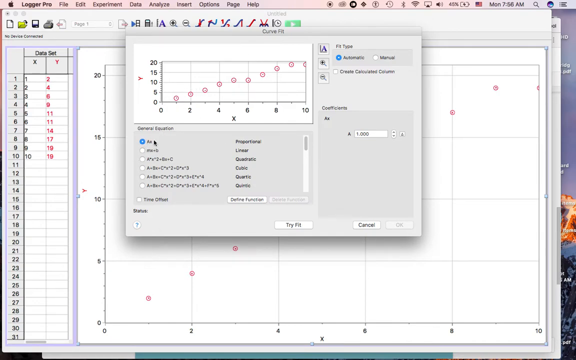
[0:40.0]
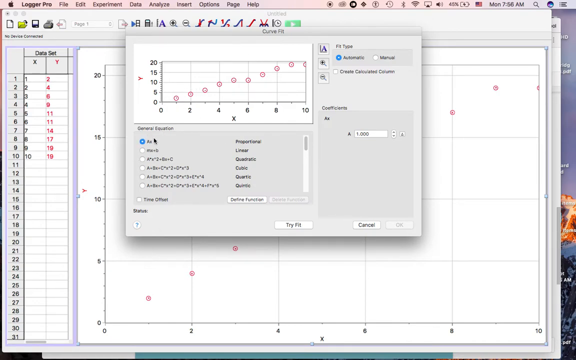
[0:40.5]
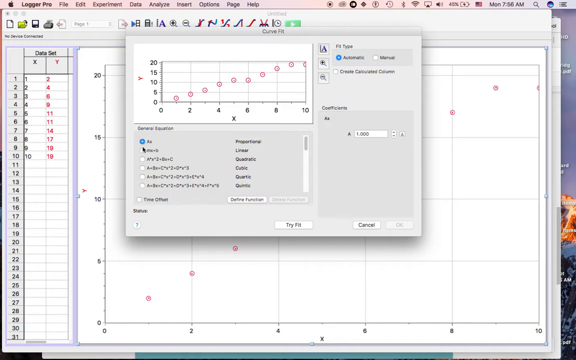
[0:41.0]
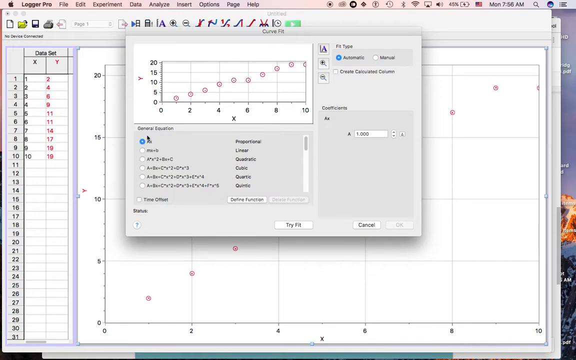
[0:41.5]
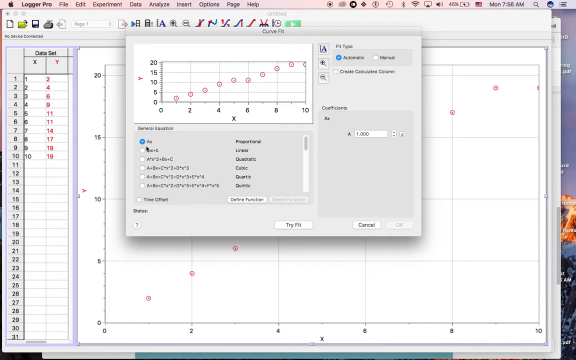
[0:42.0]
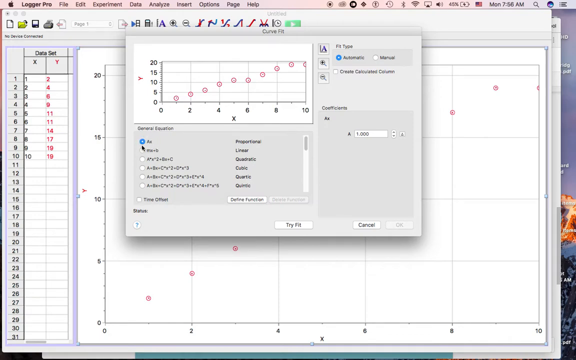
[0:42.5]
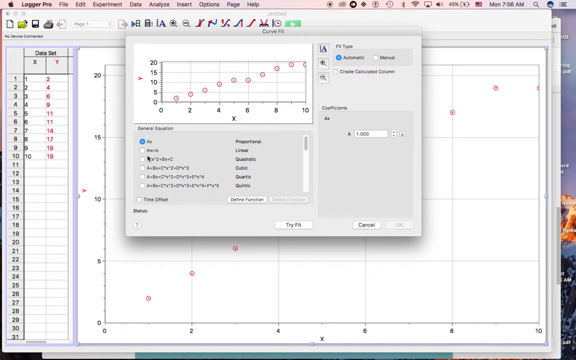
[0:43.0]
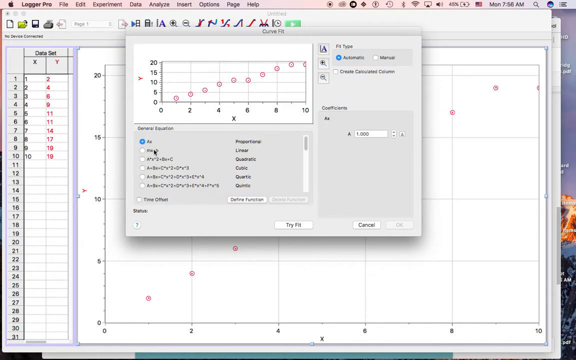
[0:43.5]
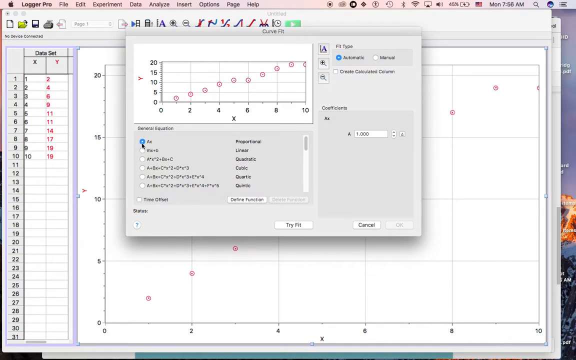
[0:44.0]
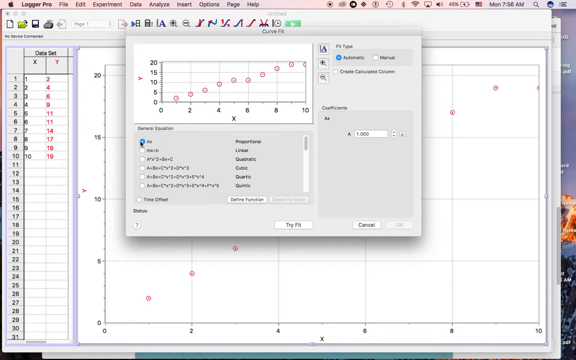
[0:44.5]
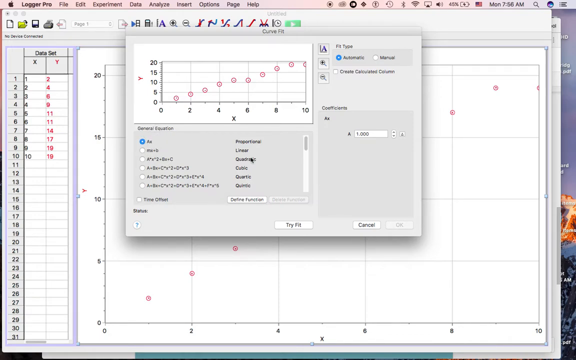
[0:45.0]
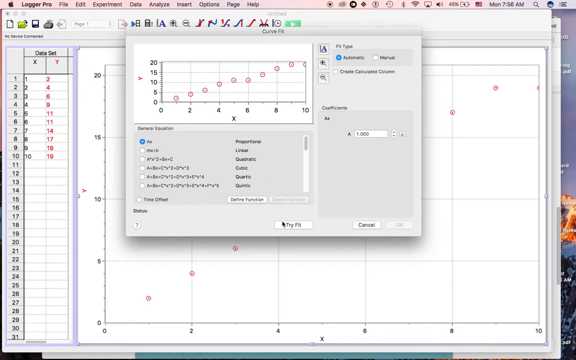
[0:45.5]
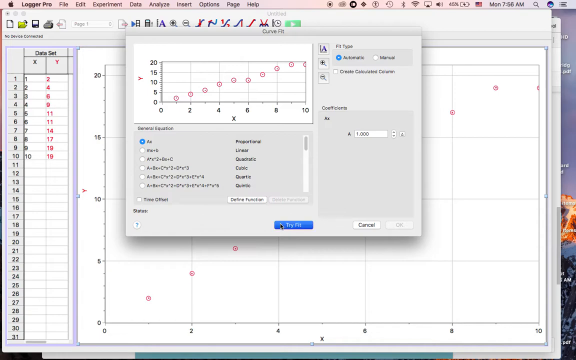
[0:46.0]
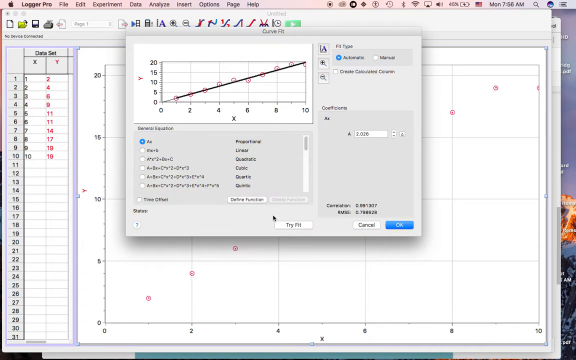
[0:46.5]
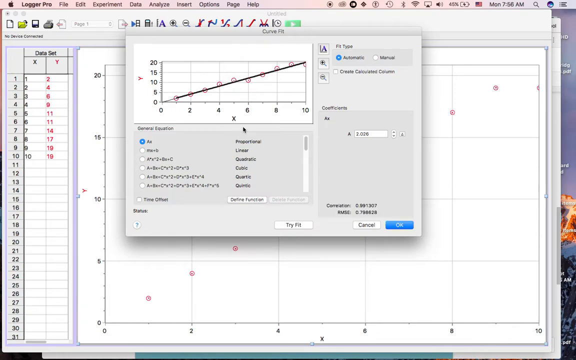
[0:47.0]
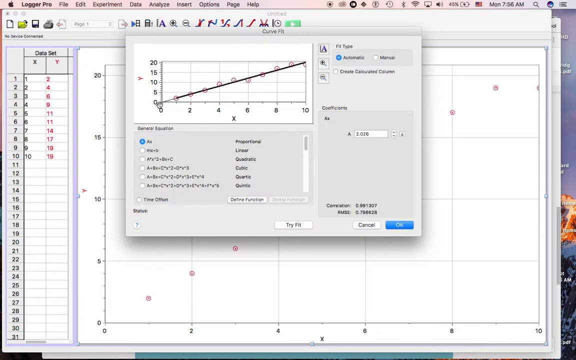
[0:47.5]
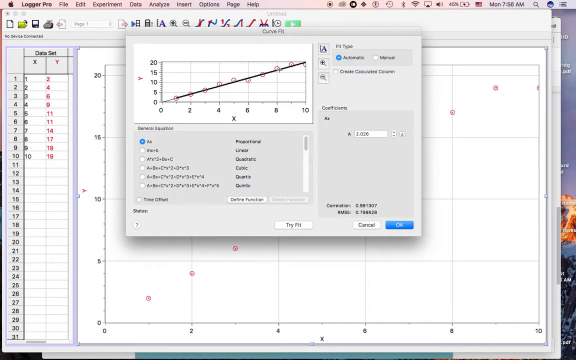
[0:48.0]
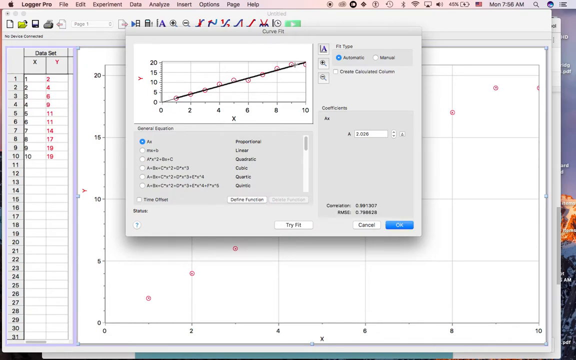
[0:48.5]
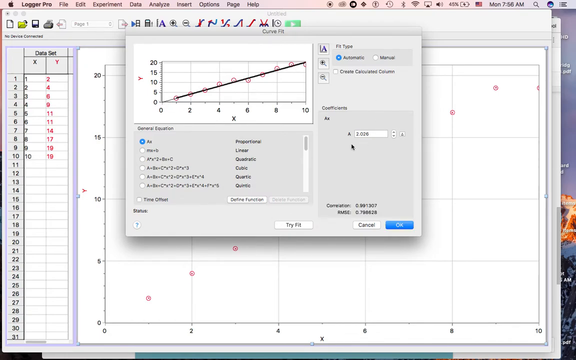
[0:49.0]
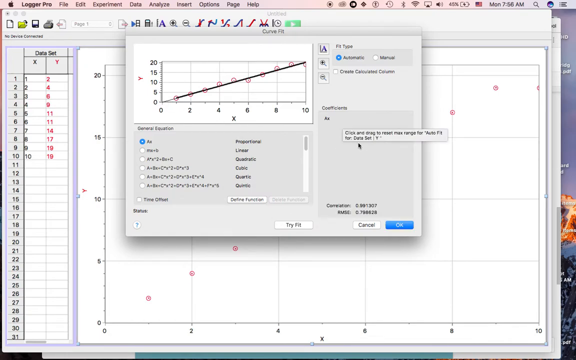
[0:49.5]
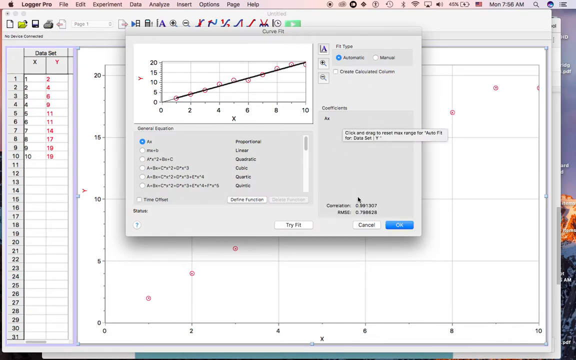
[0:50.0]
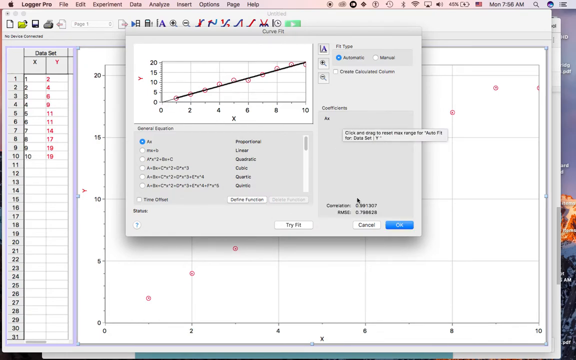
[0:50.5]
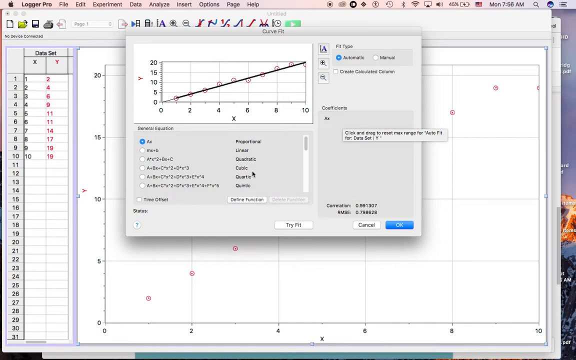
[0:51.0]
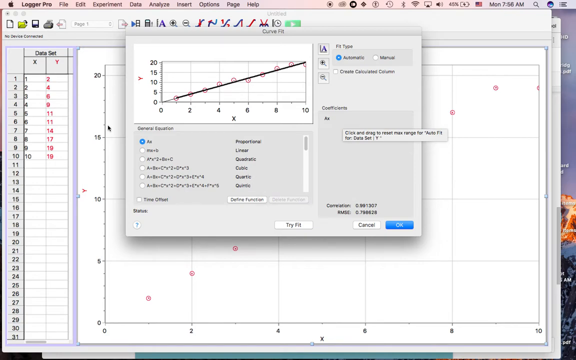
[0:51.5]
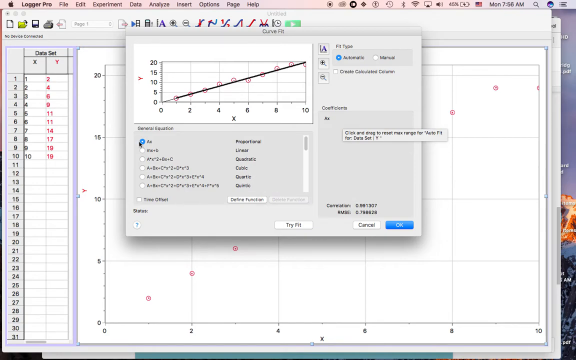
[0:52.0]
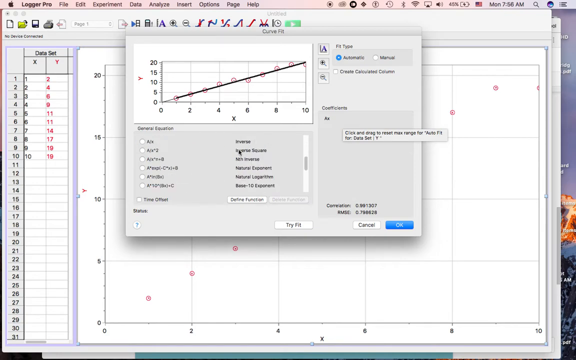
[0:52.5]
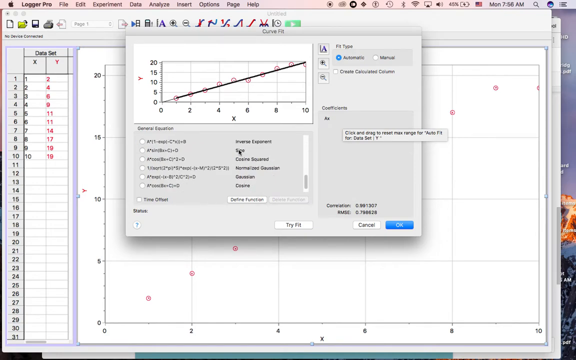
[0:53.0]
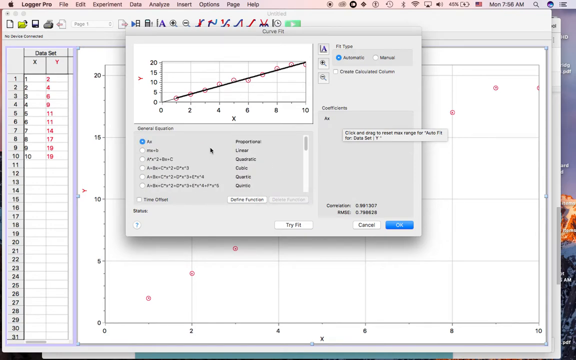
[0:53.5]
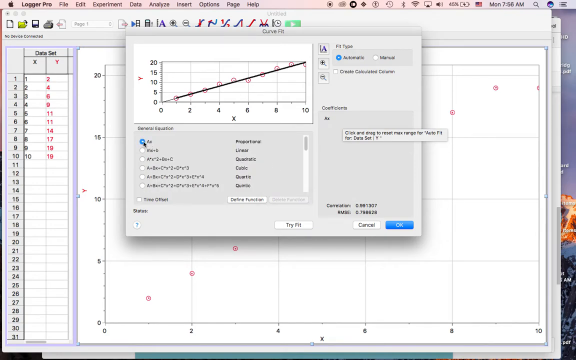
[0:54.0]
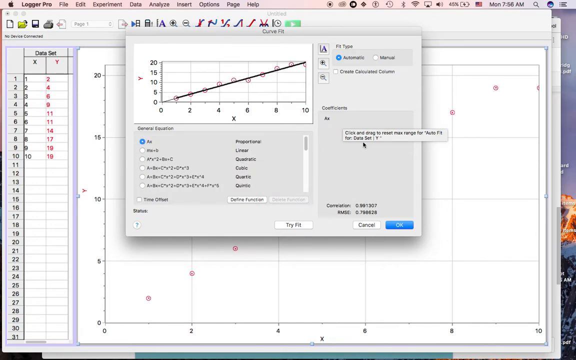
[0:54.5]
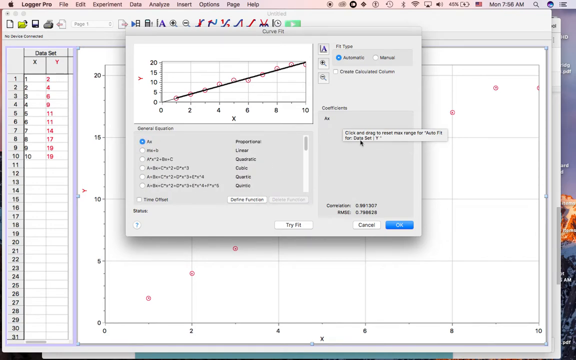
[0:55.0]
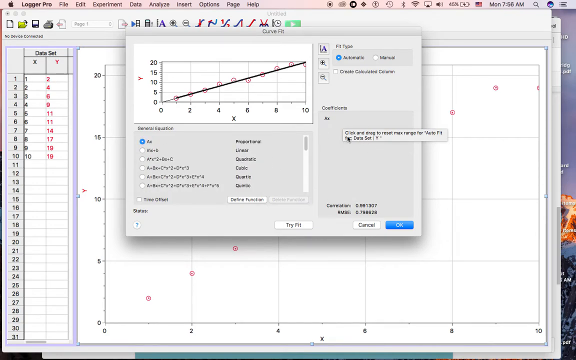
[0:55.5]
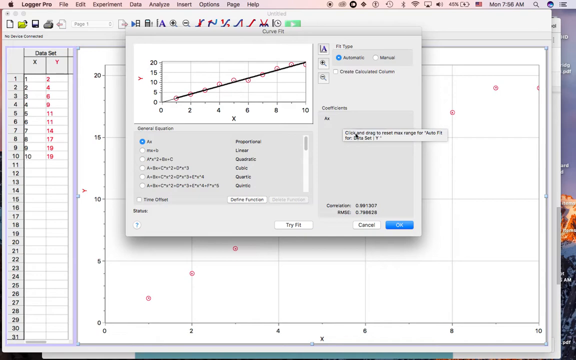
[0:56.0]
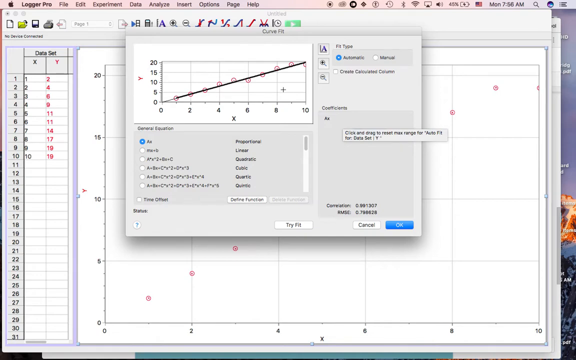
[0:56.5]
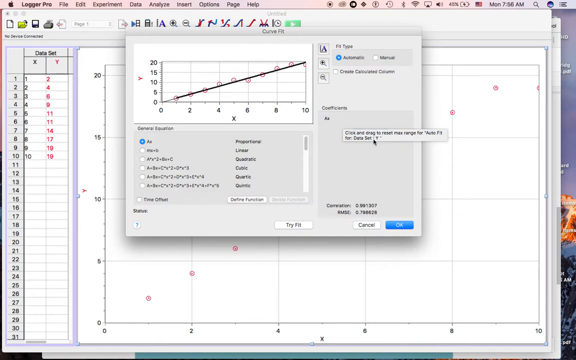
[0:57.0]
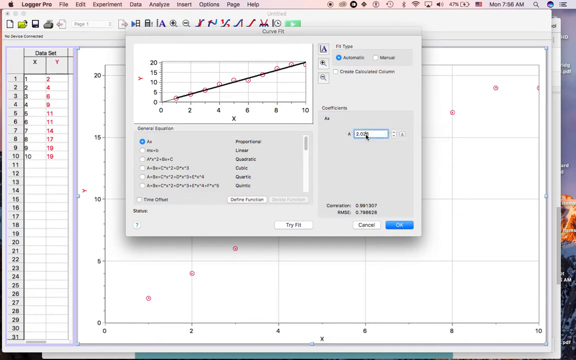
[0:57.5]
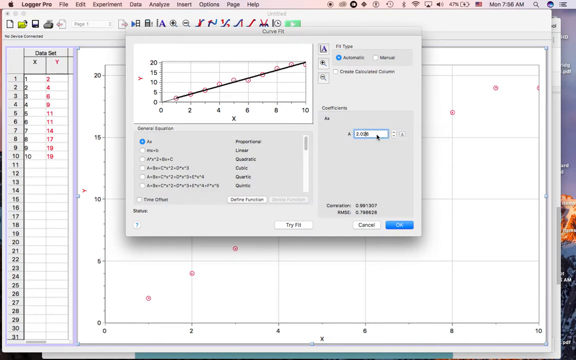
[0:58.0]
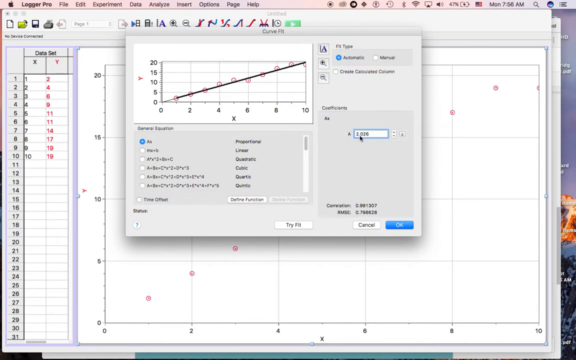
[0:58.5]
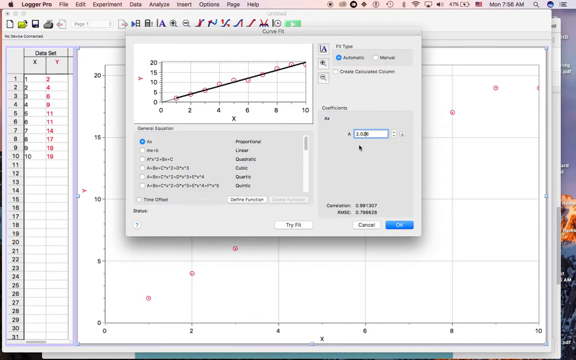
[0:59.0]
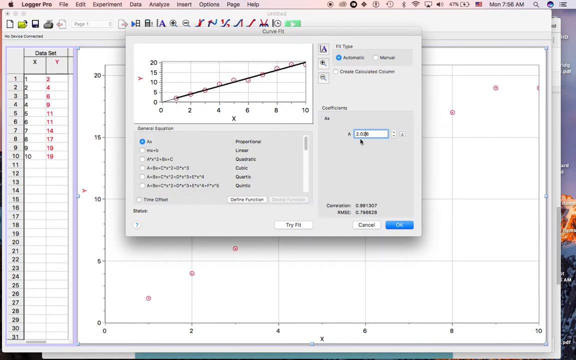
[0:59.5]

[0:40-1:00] The mouse pointer circles around the first selection marked with a blue circle. In the top left corner of the small window there is a preview of what looks like the graph, a miniature picture with light red to pink circles throughout. The pointer makes the circling motion on the first selection again, then moves to the bottom center of the window, over a button that says "Try fit". The user clicks it, and the preview changes: a diagonal black line now runs through the graph, passing through all of the light red circles and following their pattern. The pointer moves to the right side of the small window, then to the left side, and scrolls through the list of equations. It then moves to the right side to a text box that already contains the number "2.026".